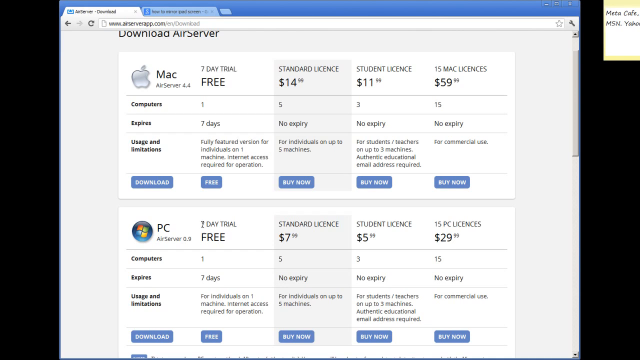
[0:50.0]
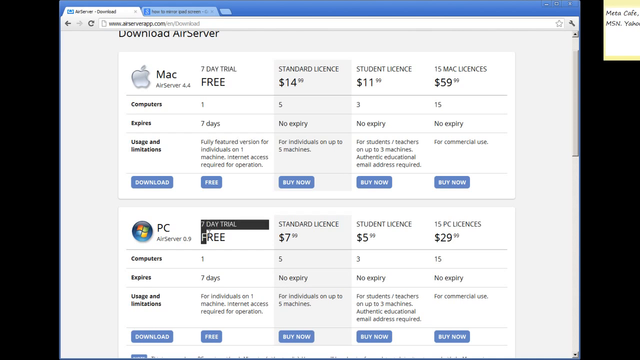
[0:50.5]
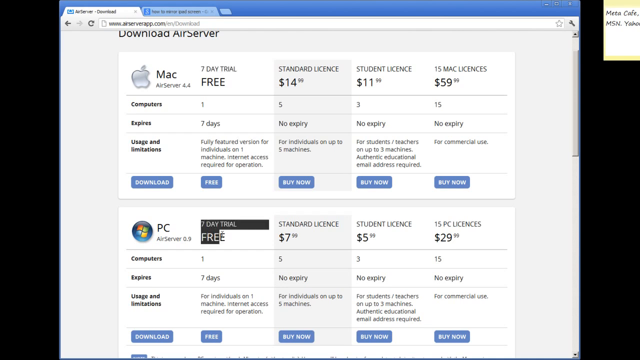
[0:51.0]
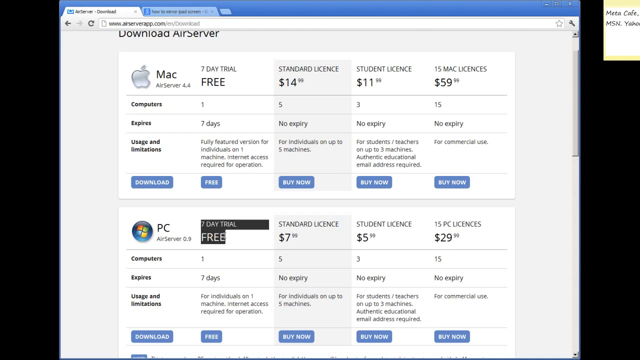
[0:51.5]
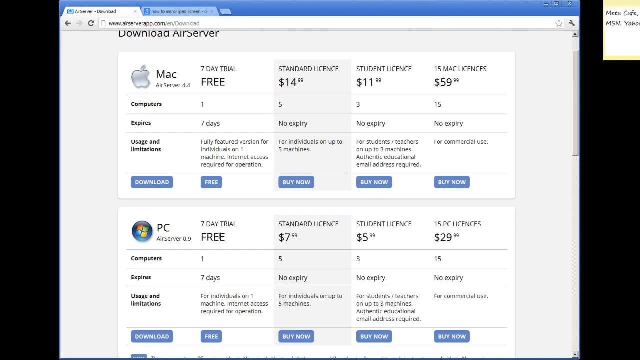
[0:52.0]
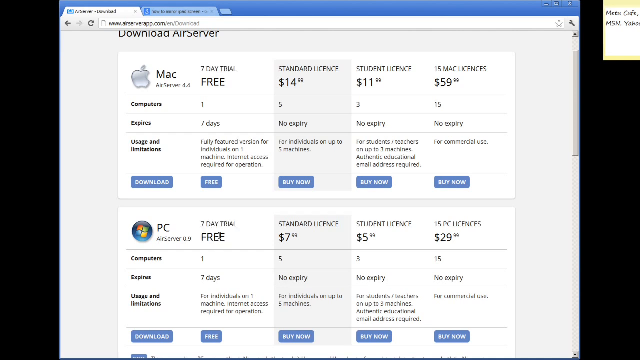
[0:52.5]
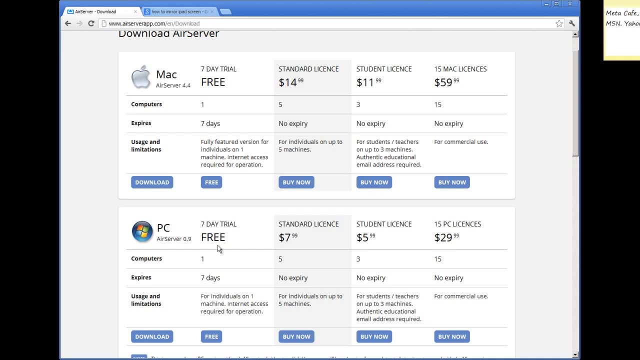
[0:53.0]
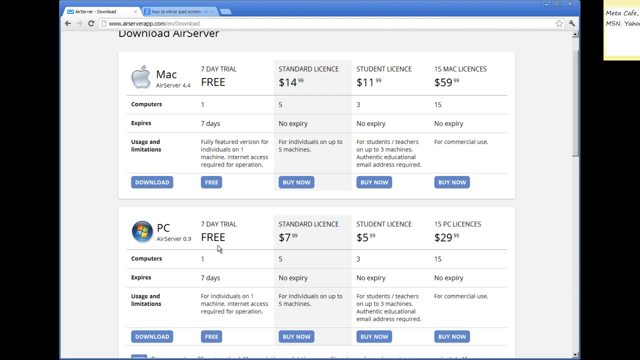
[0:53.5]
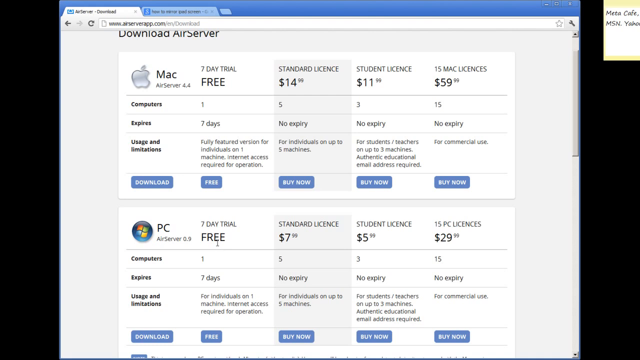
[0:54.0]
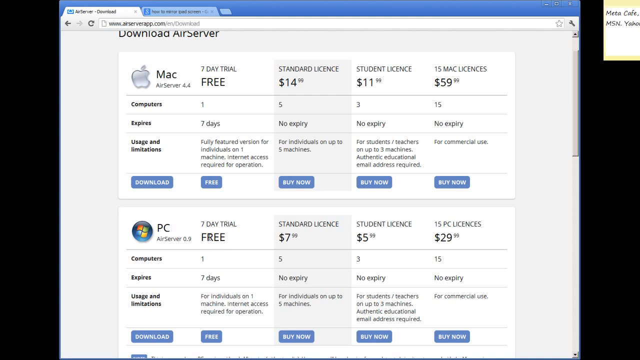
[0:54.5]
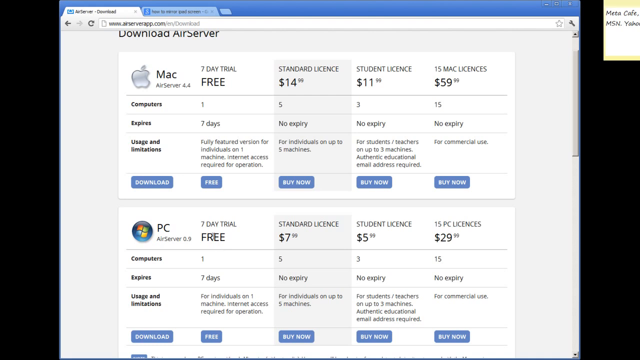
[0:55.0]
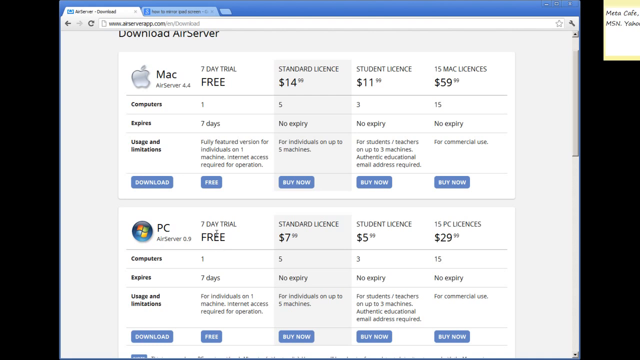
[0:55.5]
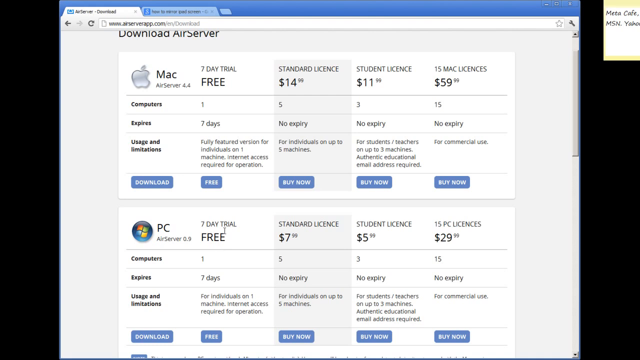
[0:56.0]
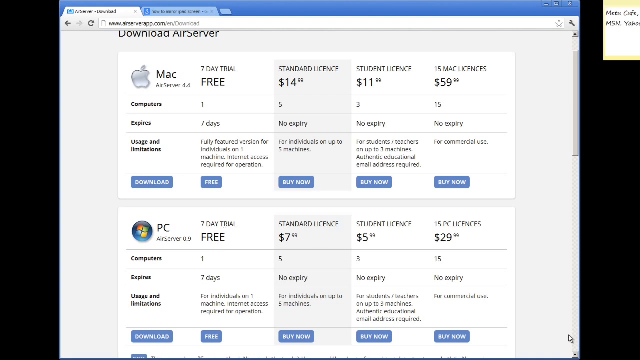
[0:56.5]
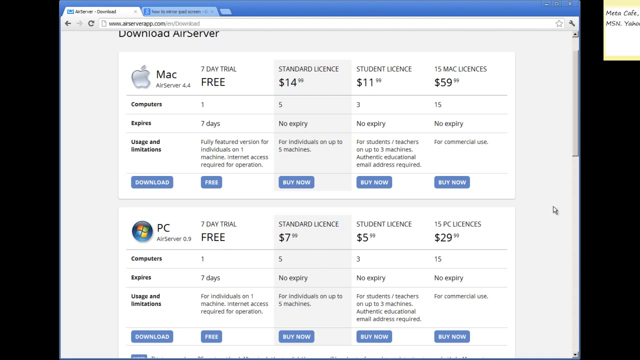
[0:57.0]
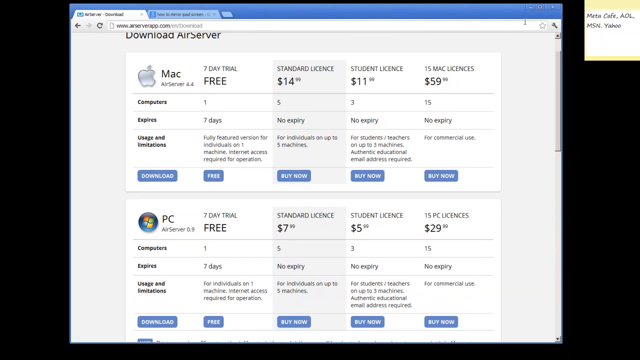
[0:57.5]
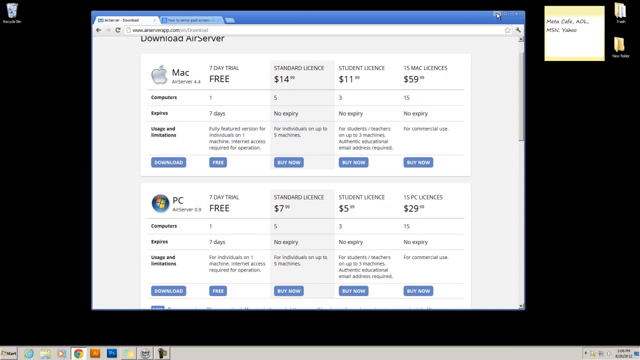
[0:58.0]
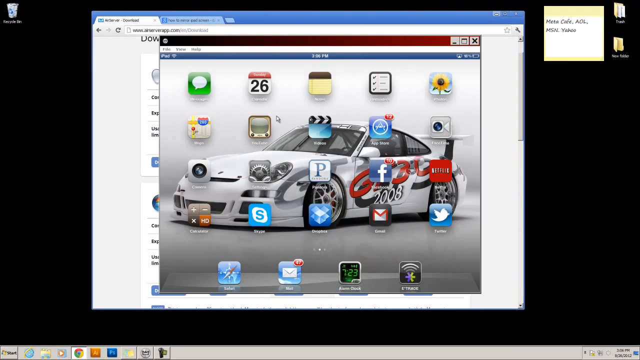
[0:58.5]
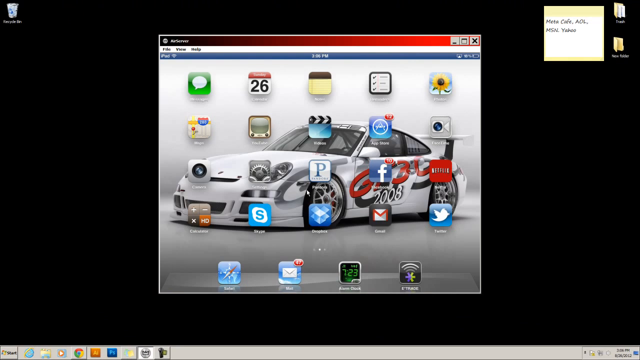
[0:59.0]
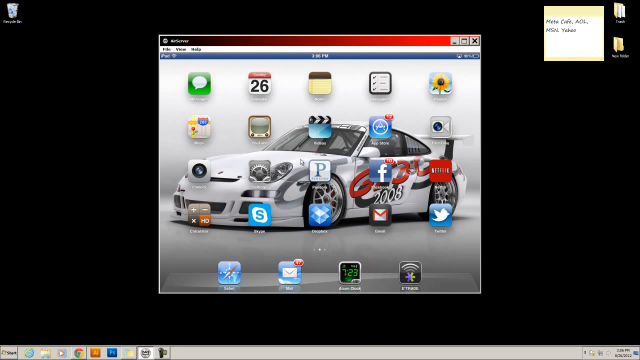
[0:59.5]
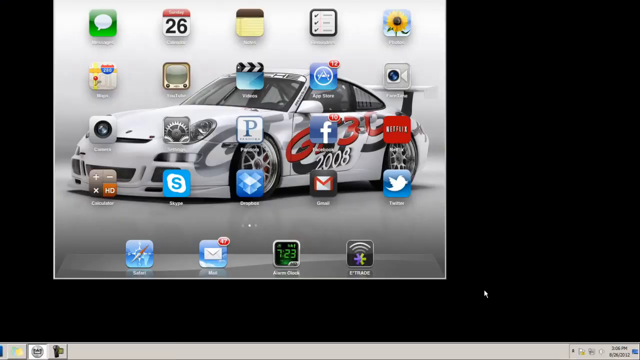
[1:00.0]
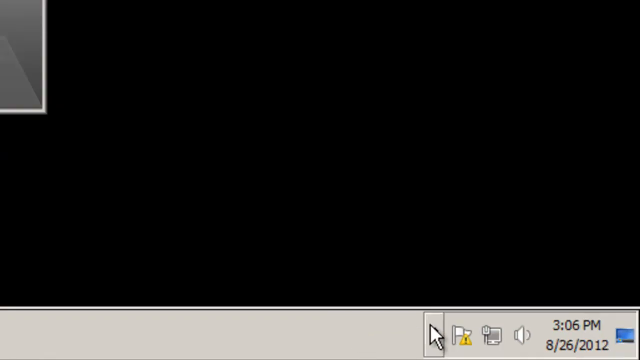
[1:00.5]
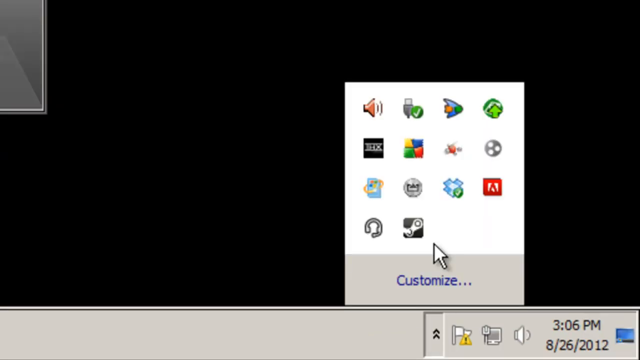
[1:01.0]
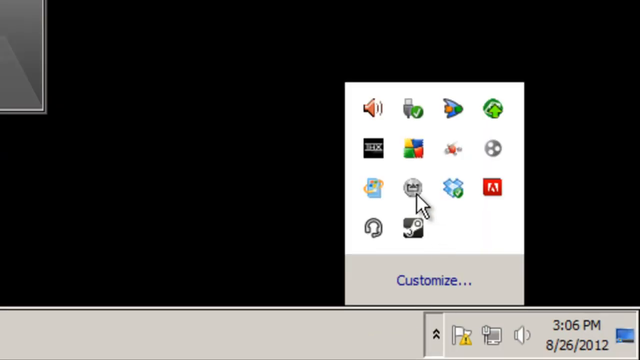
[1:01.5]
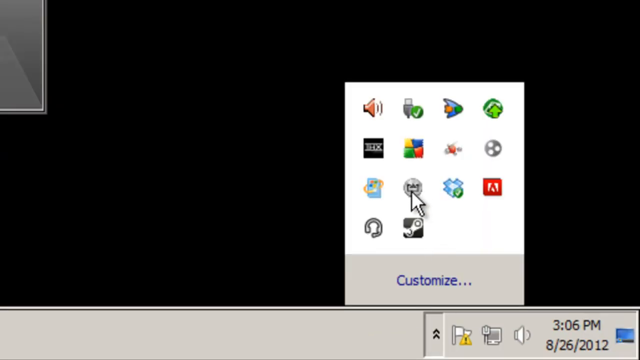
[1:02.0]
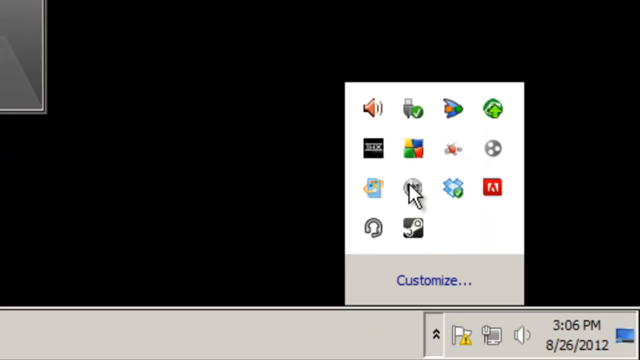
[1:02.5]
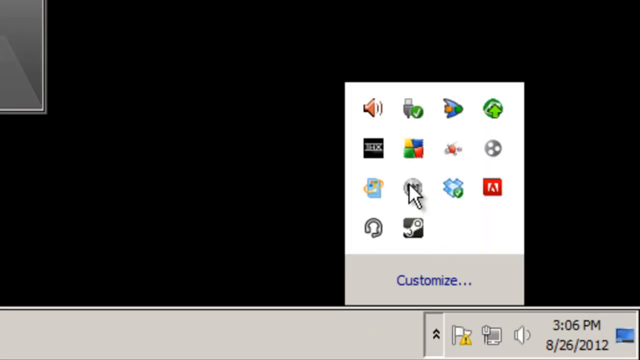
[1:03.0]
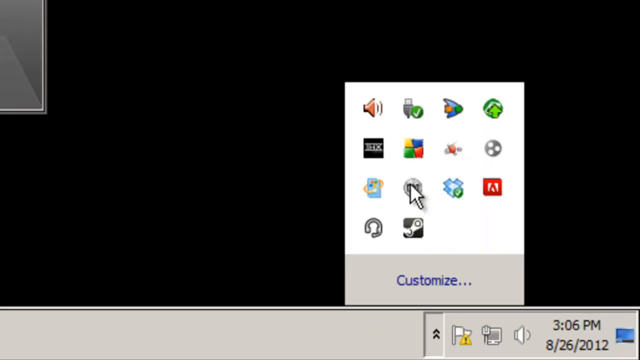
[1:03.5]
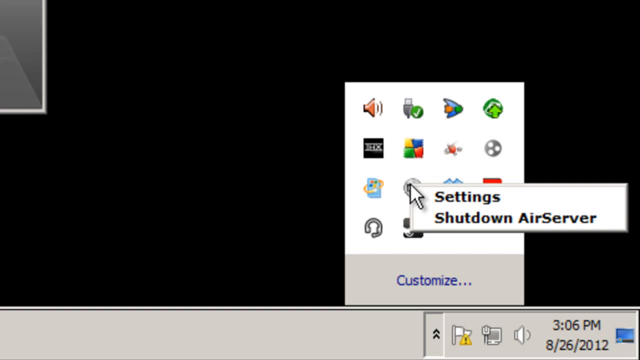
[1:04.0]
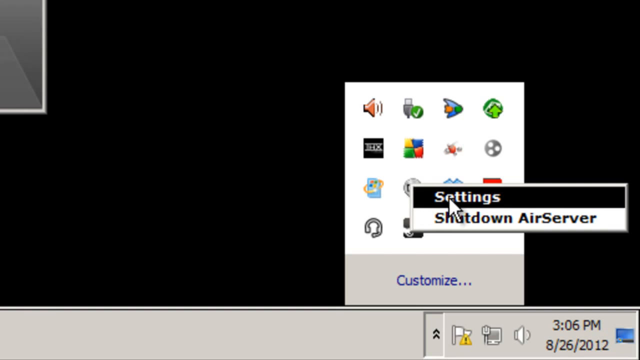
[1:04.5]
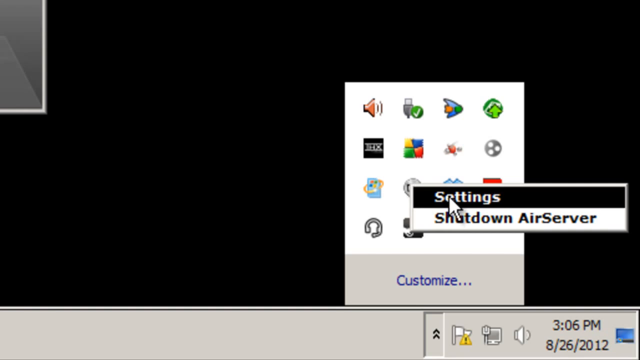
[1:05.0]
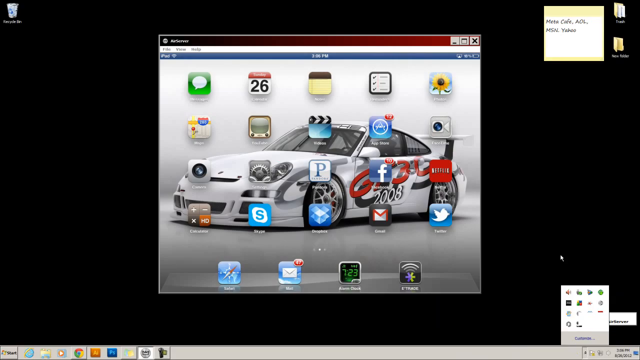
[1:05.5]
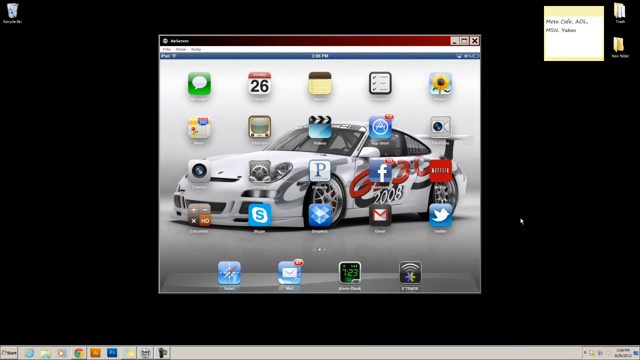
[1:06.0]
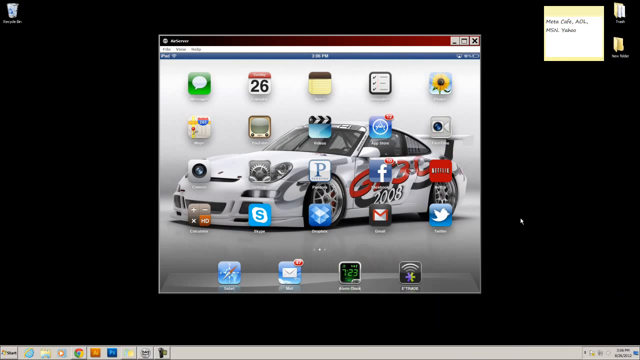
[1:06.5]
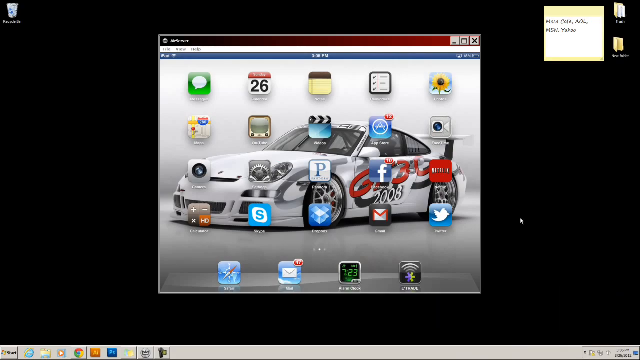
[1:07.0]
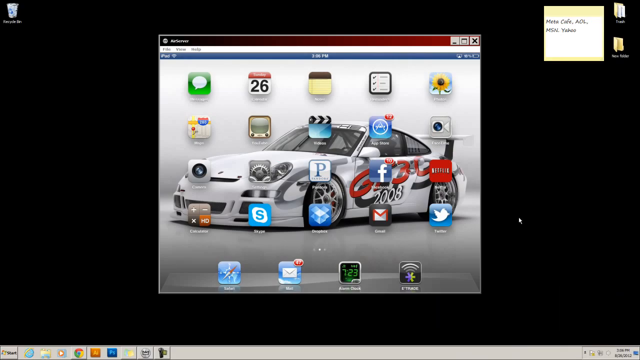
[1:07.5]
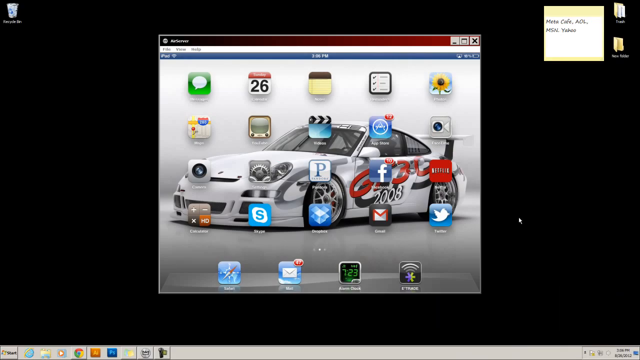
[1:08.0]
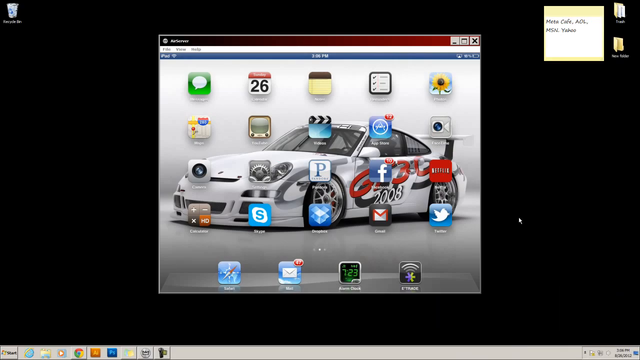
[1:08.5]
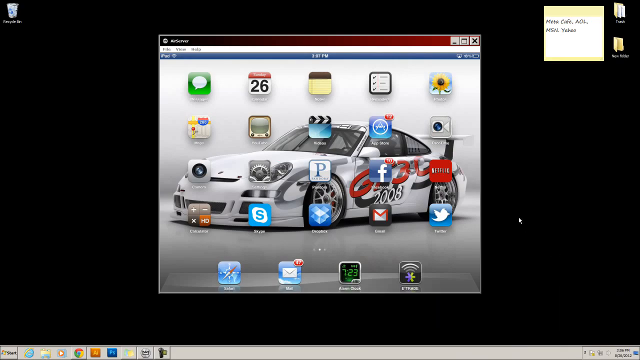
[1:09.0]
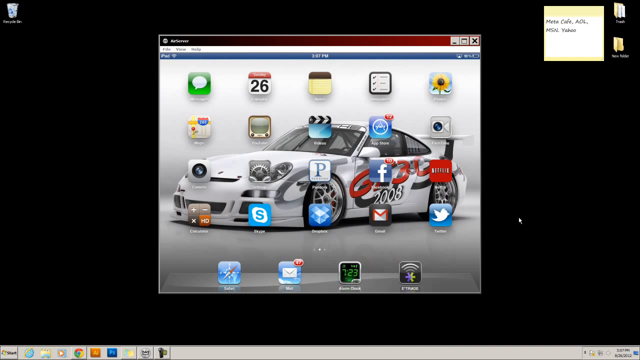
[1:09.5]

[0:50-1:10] The AirServer download page shows the Mac options in the top half of the screen, with the Mac symbol, "Mac" in black text, and 7 day trial free, standard licence, student licence and 15 Mac licences each in their own columns. The same options for PC are in the bottom half with the Windows PC logo, at different prices: for Mac the standard is $15, student $12 and 15 licences $60, while for PC the standard is $8, student $6 and 15 licences $30. The user highlights the 7 day trial free text next to PC and a black box goes around it, which quickly disappears as the user clicks off it. The user hovers the mouse over the free button, moves it to the bottom corner and minimises the screen, returning to the black background with the silver box, the silver car and the iPad app icons on top of it. The user makes several anti-clockwise circular movements with the mouse and moves it to the bottom right of the screen, and the camera follows, zooming in. The user opens a double up arrow on the taskbar in the bottom right corner, revealing a number of apps on a mini white taskbar, clicks a silver circle icon, and selects settings from the pop-up that appears. Instead of a settings page appearing, the view zooms back out to the black background with the silver box, the car and the iPad apps.